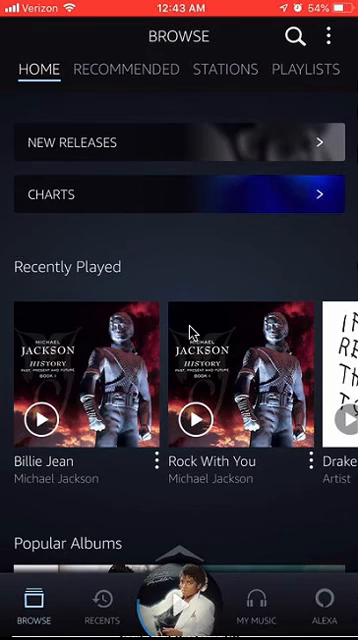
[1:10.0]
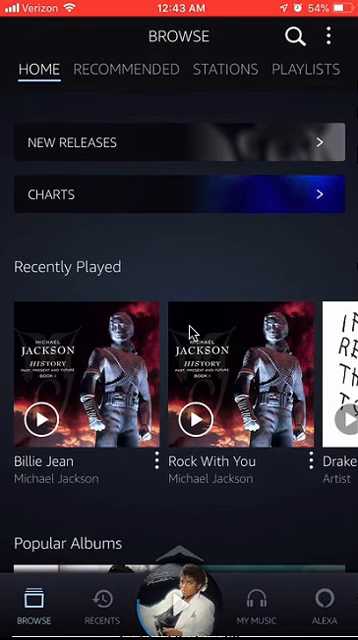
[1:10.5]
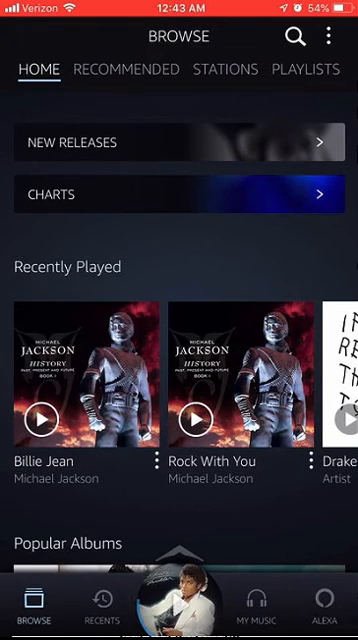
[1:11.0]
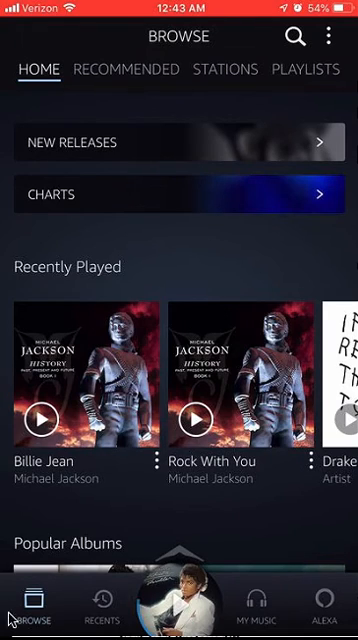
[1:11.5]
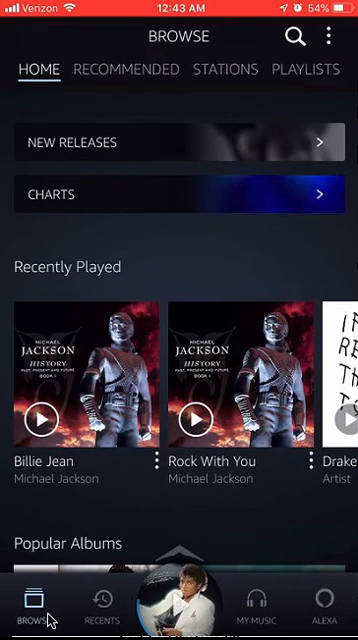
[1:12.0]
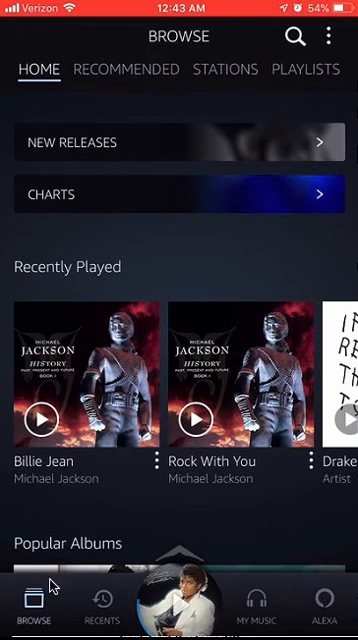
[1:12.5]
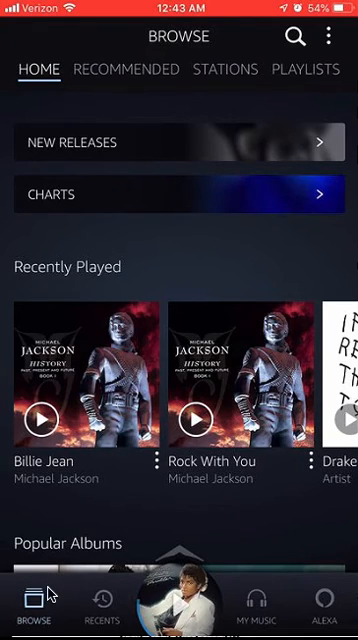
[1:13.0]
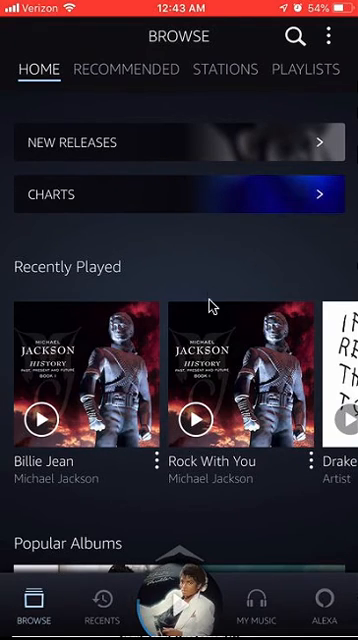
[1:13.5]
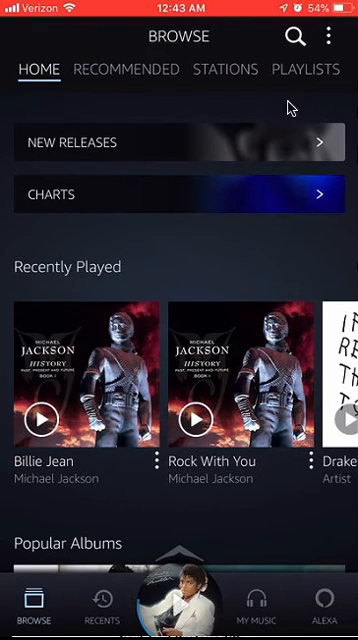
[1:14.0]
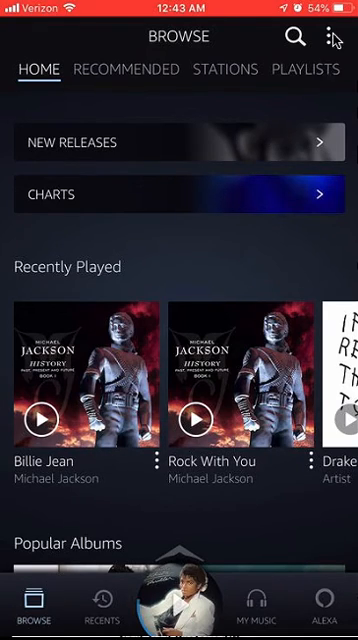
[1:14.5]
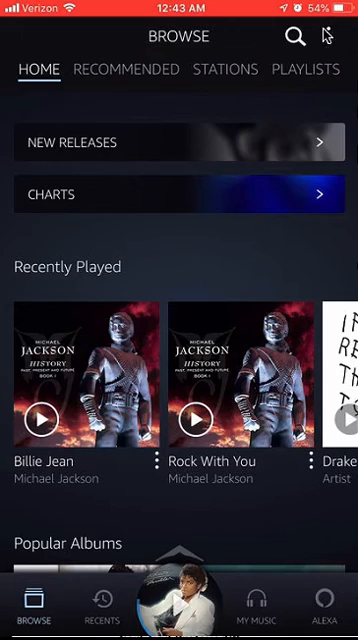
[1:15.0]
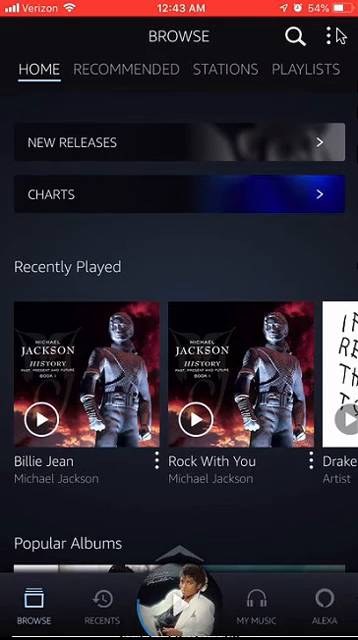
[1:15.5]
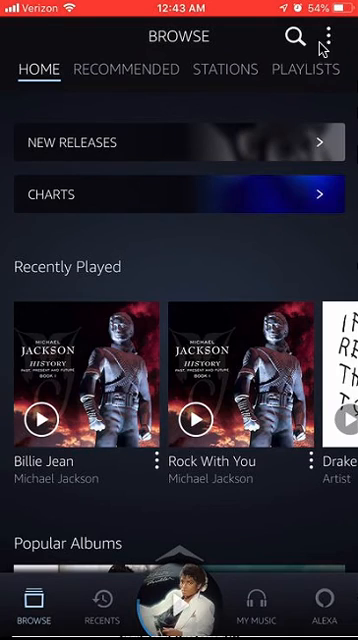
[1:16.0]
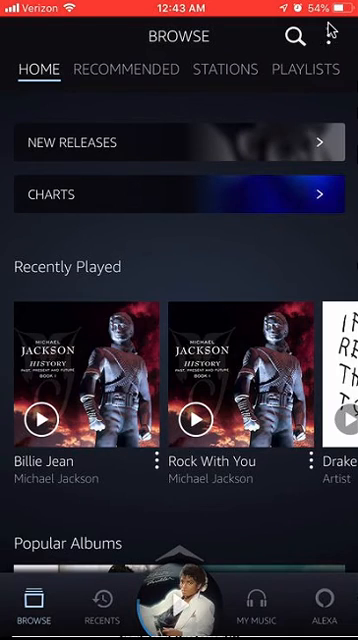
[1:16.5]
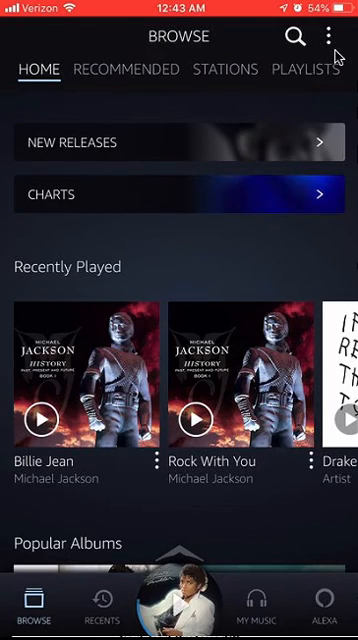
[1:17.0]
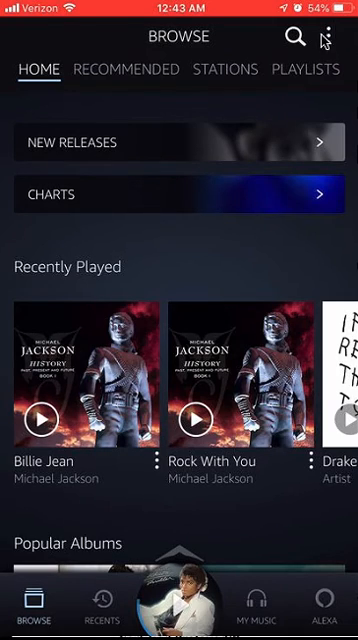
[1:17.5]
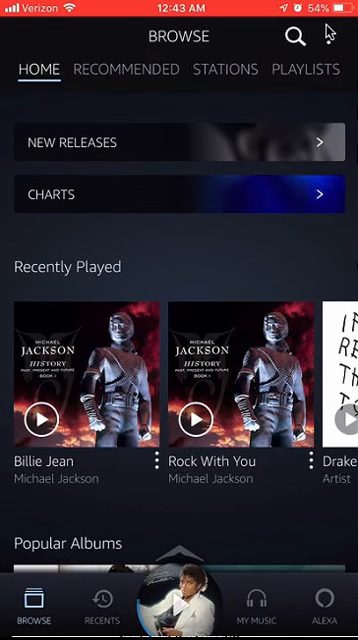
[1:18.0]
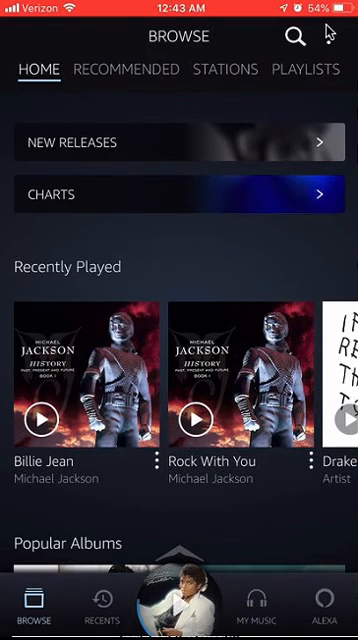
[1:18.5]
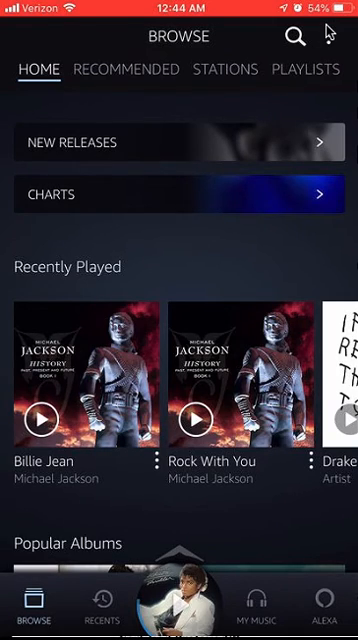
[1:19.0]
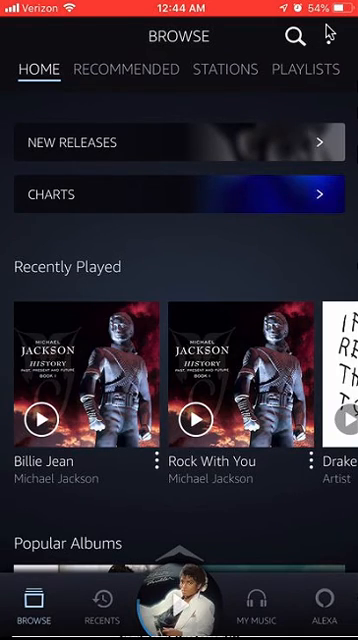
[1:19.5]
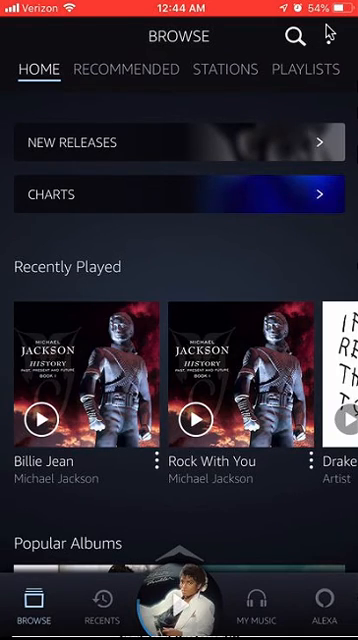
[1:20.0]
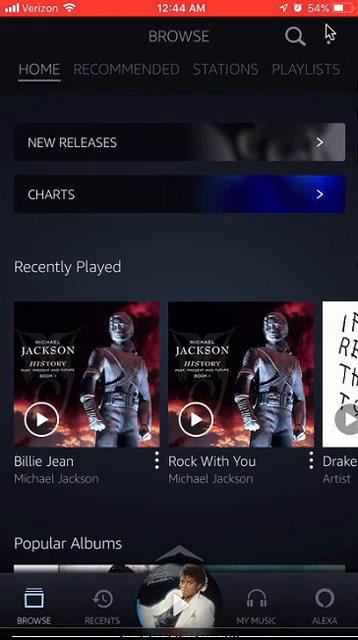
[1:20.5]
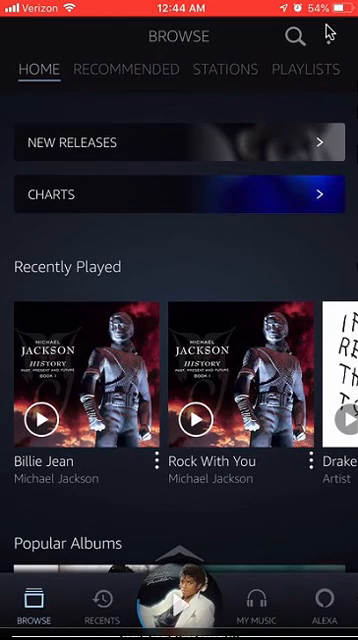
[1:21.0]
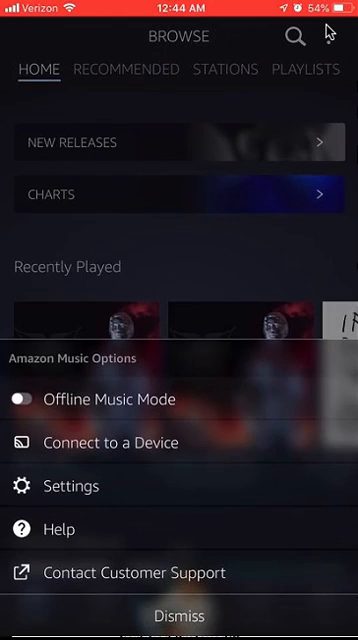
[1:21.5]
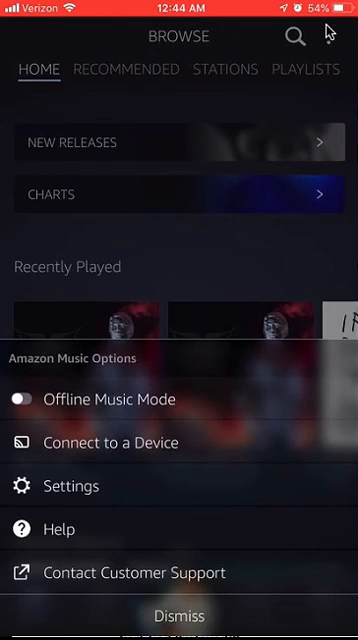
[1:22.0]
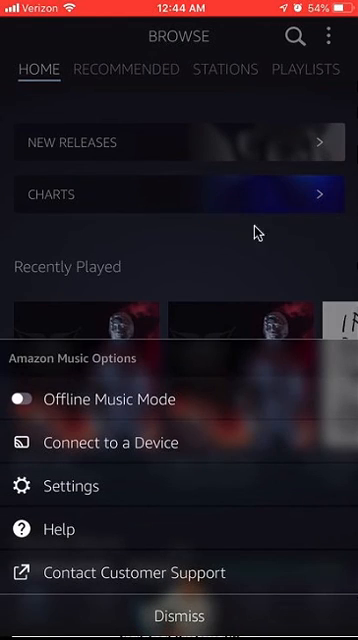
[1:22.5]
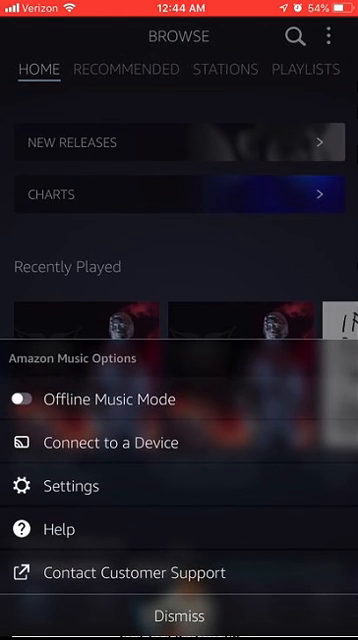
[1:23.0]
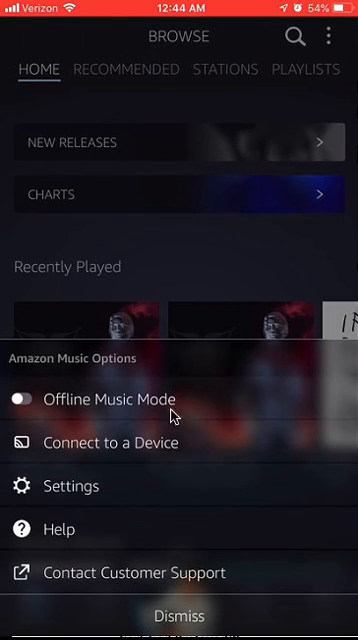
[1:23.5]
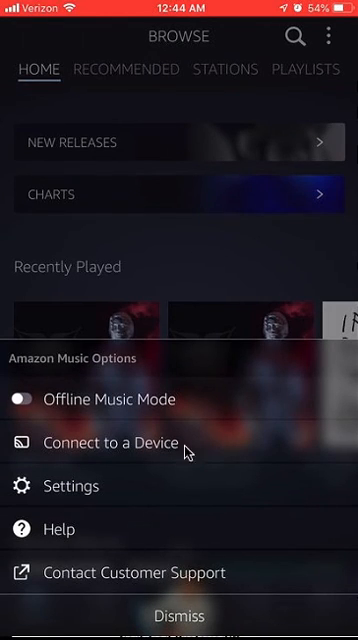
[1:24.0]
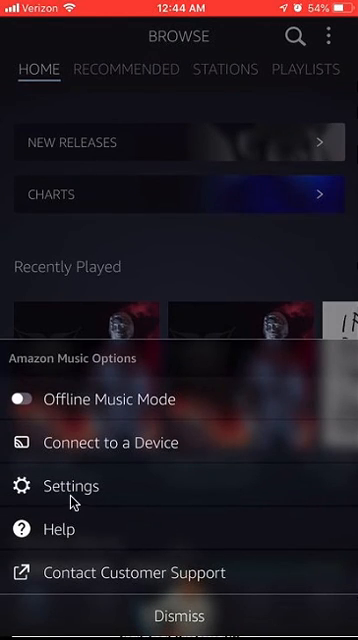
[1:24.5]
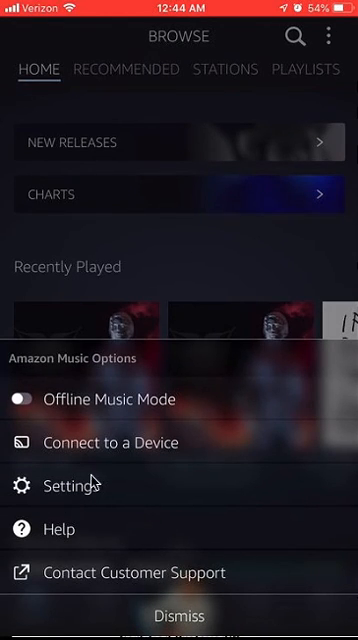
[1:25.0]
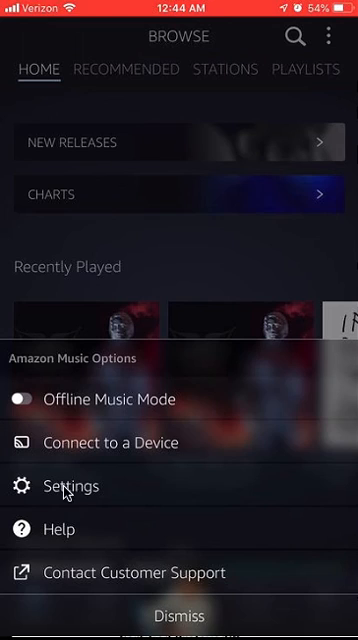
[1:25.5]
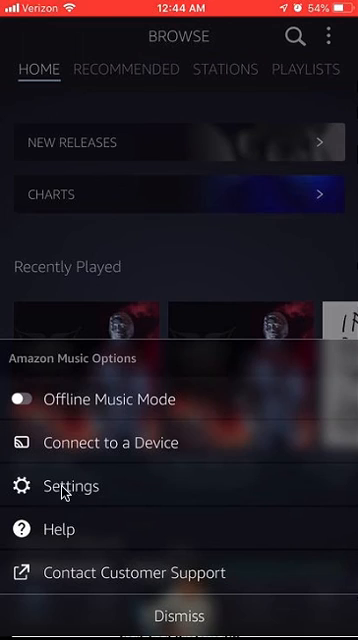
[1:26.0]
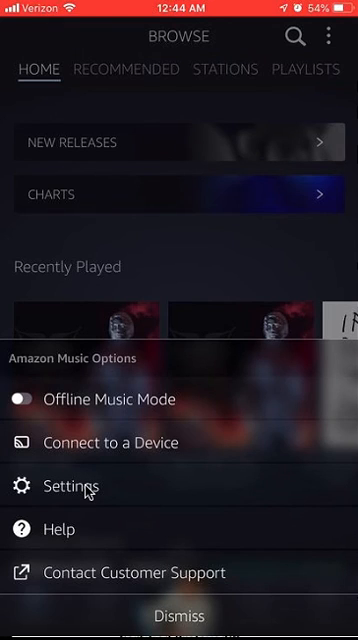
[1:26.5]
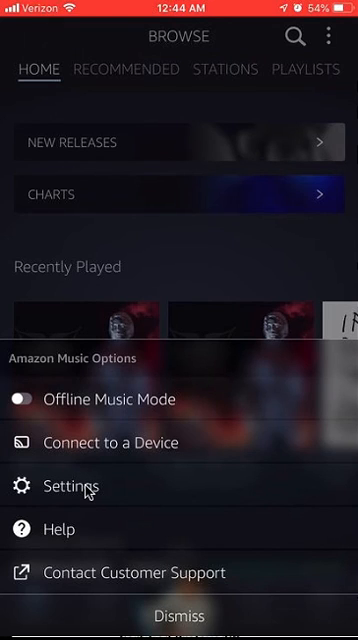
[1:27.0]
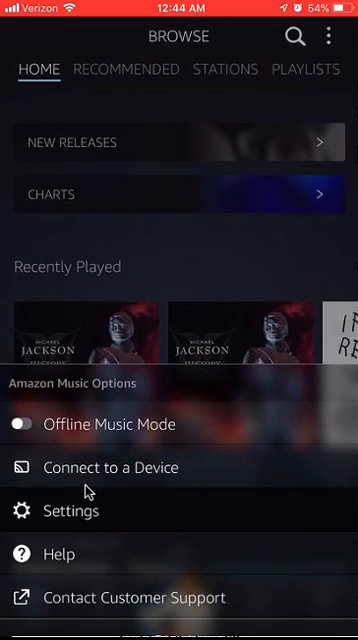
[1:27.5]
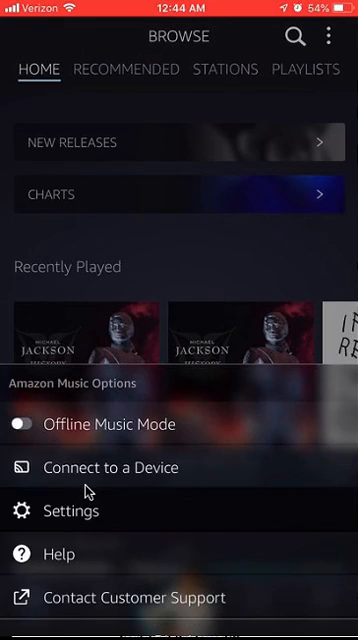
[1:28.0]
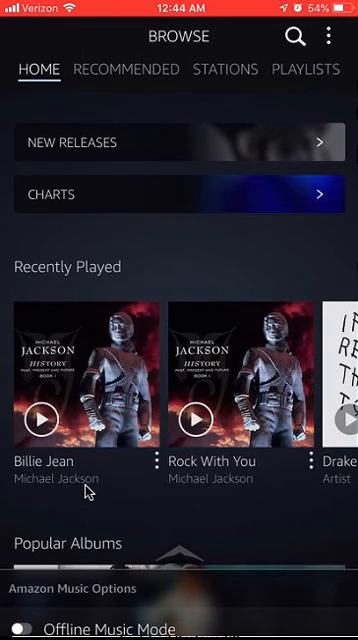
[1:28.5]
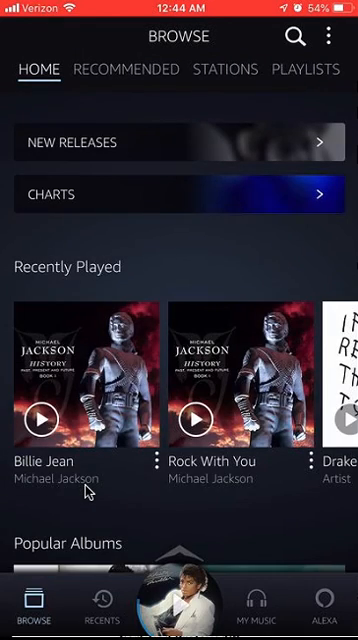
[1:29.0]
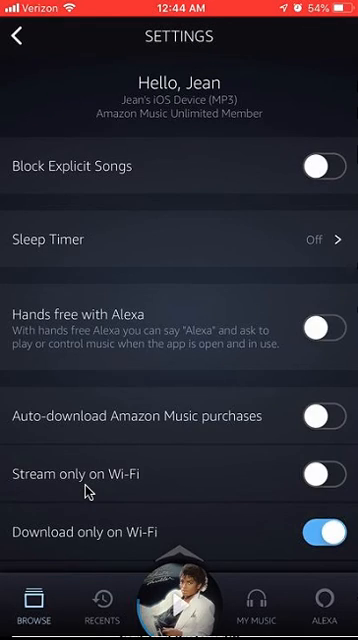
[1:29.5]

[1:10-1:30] On a cell phone, the user is in what is possibly a radio station or music app showing his most recently played music: Michael Jackson's Billie Jean, Michael Jackson's Rock With You and a Drake song, along with an option to look at different radio stations. The cursor hovers over the three dots, and he apparently clicks them, revealing an option for offline music mode, which is turned on. This appears to be Apple Music, with Apple Music options to connect to a device, settings, help, contact customer service, and dismiss. He focuses on the settings option and seems to click it, after which the settings screen appears very briefly.